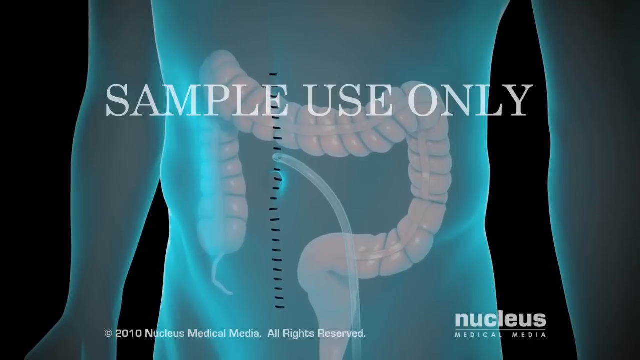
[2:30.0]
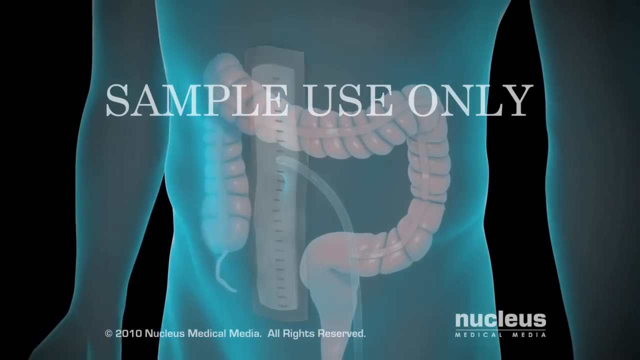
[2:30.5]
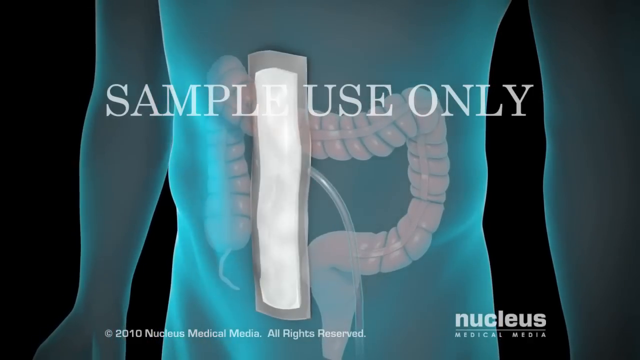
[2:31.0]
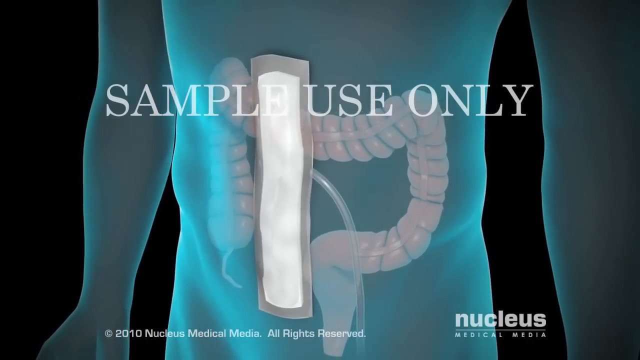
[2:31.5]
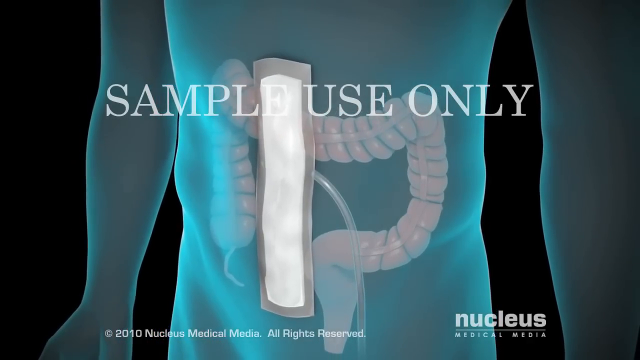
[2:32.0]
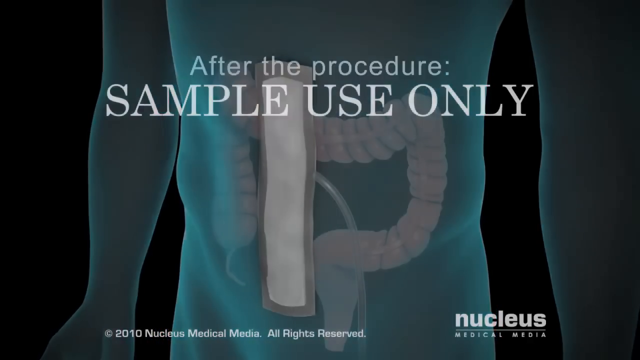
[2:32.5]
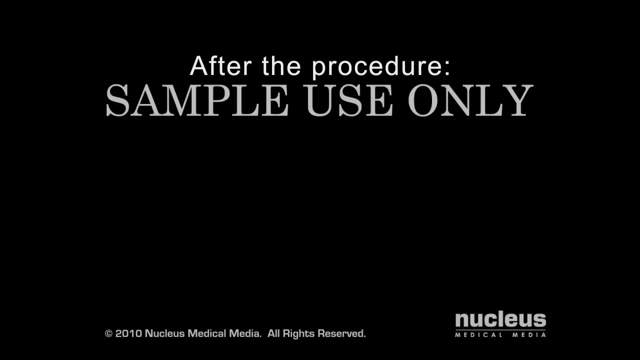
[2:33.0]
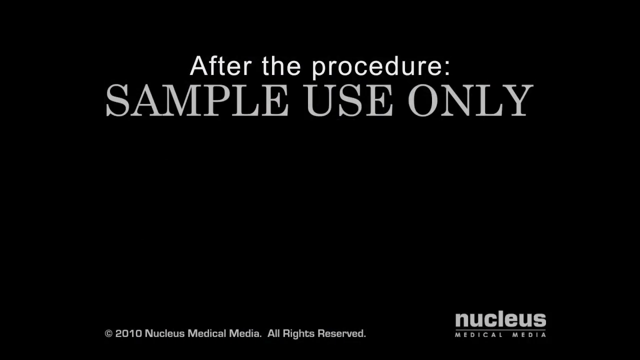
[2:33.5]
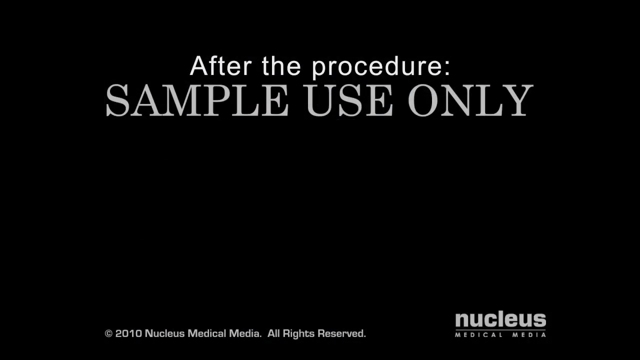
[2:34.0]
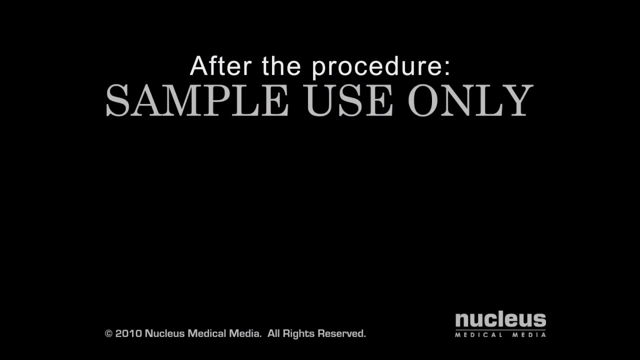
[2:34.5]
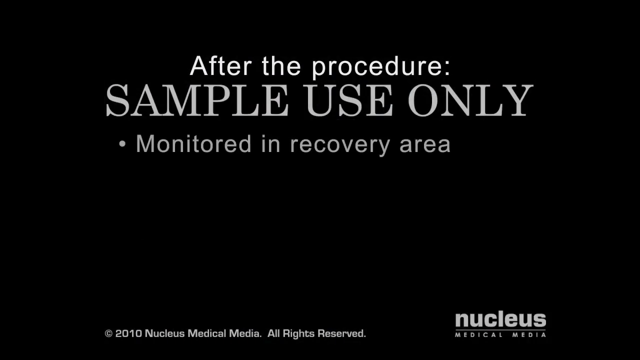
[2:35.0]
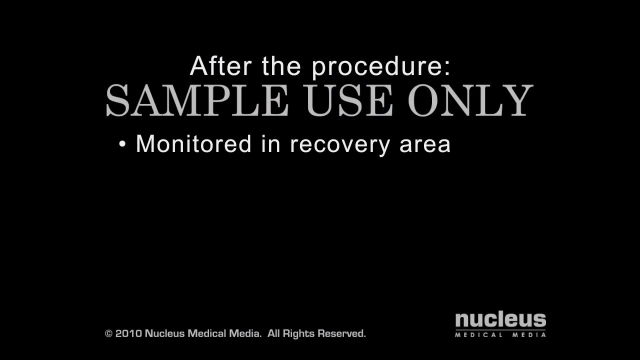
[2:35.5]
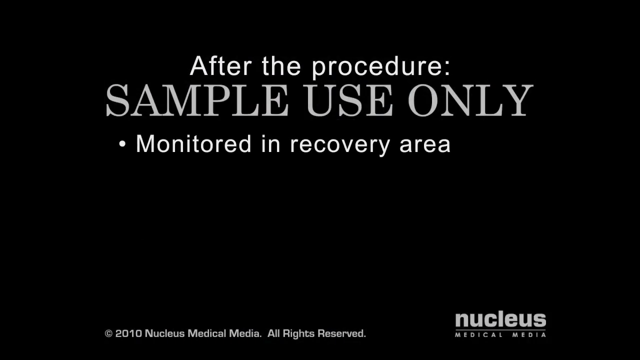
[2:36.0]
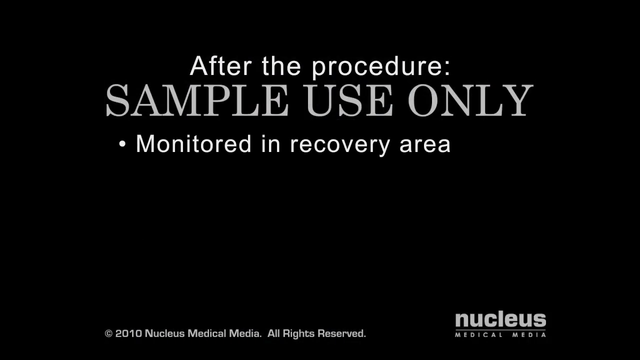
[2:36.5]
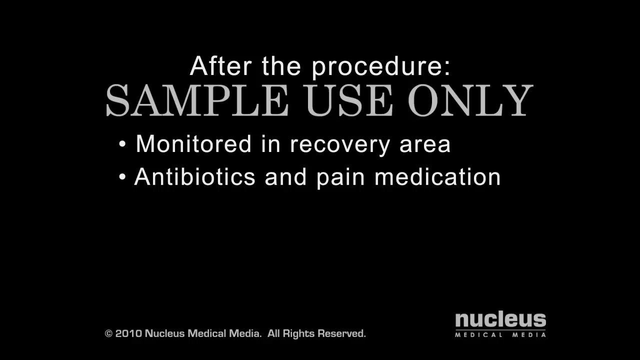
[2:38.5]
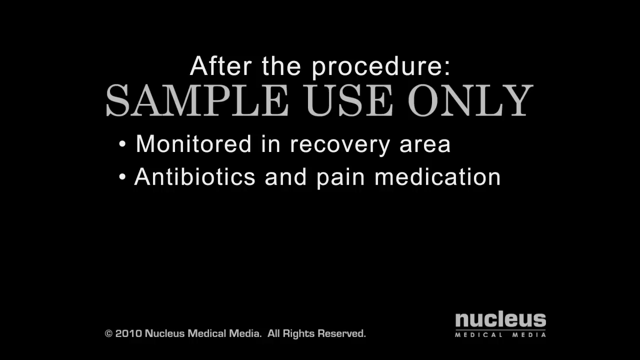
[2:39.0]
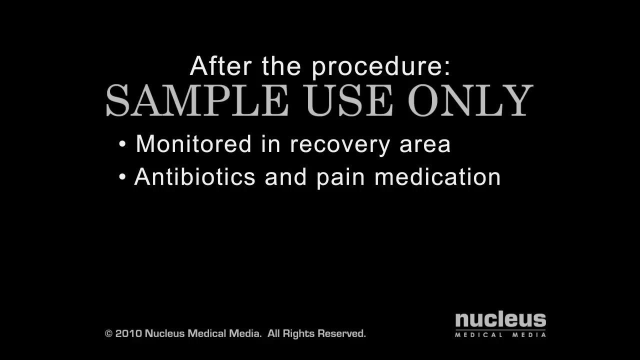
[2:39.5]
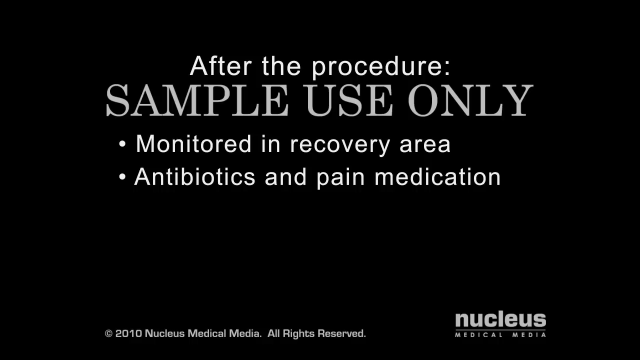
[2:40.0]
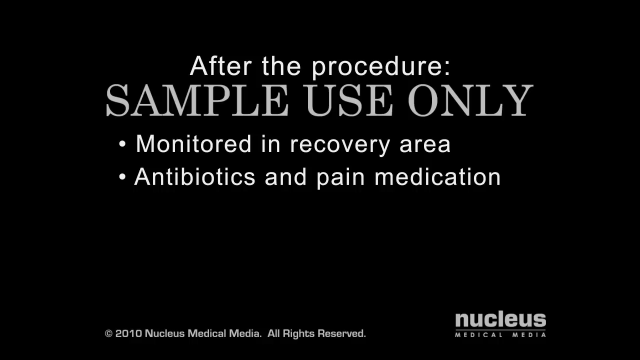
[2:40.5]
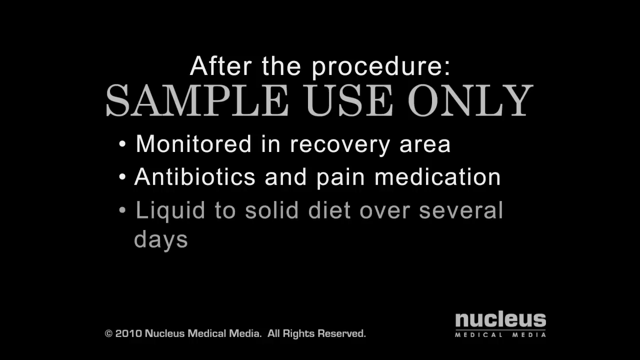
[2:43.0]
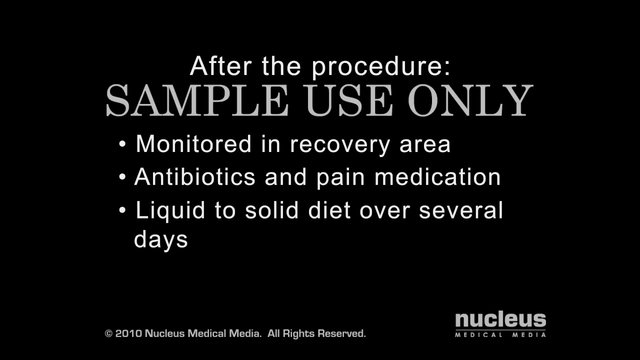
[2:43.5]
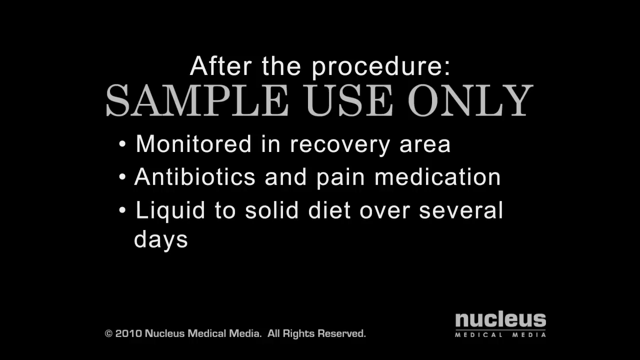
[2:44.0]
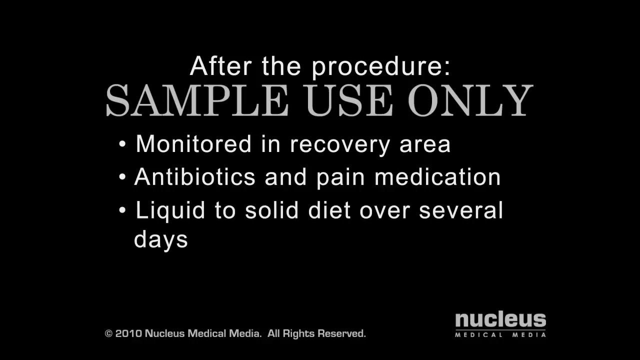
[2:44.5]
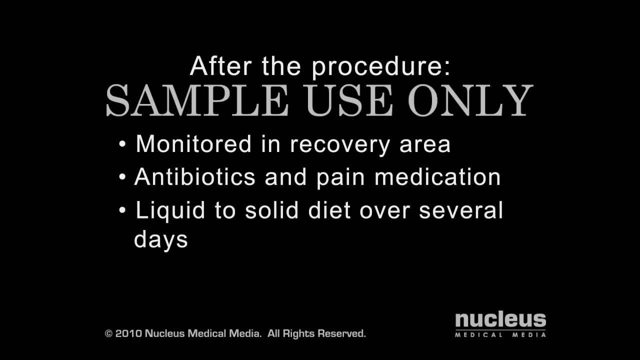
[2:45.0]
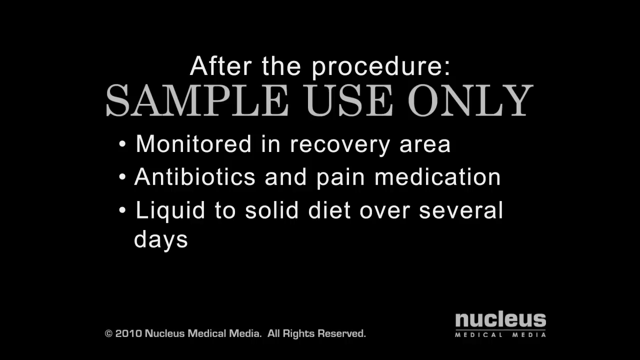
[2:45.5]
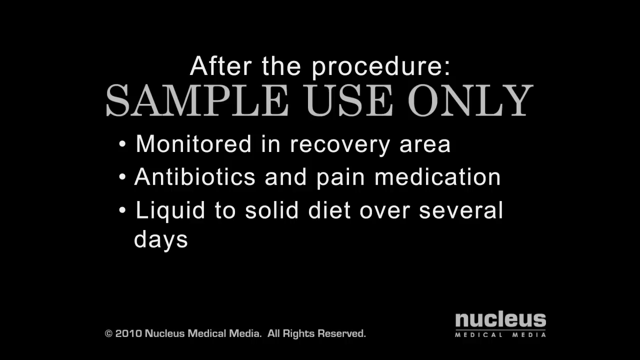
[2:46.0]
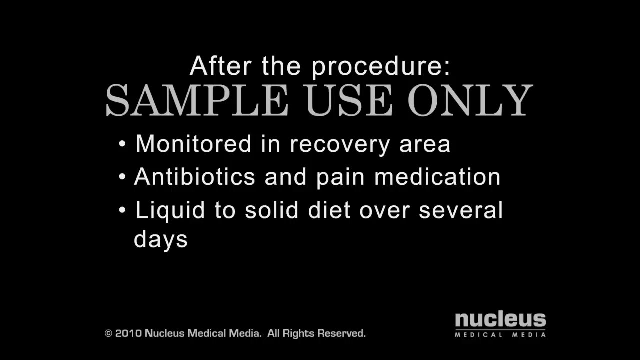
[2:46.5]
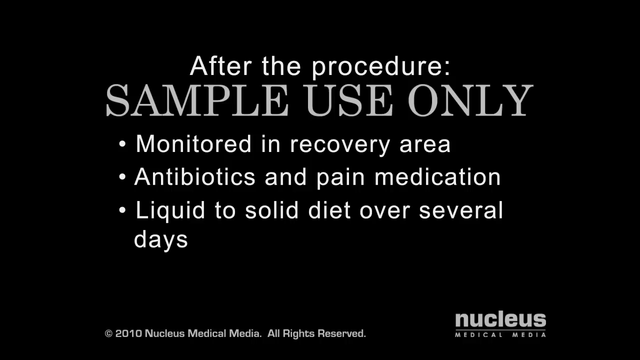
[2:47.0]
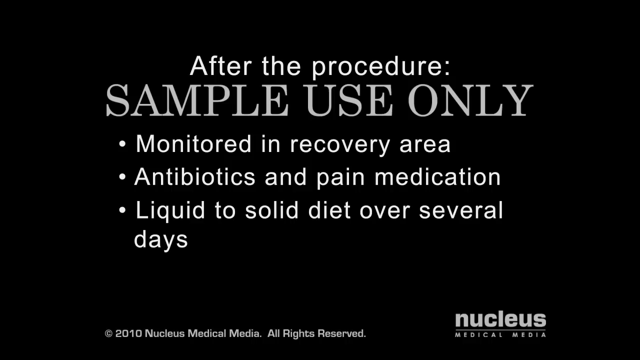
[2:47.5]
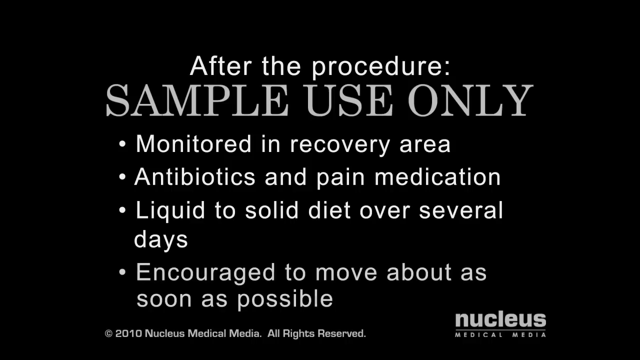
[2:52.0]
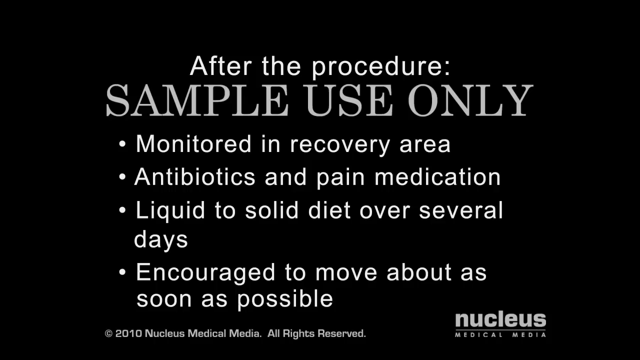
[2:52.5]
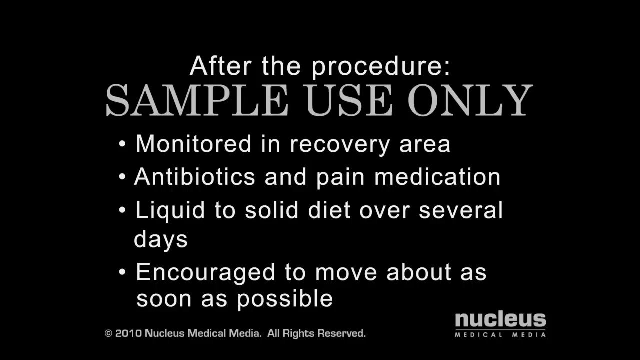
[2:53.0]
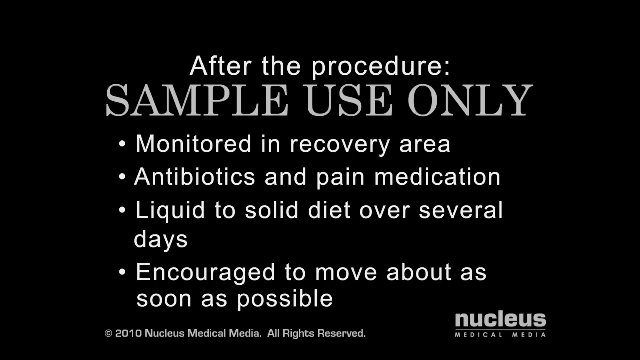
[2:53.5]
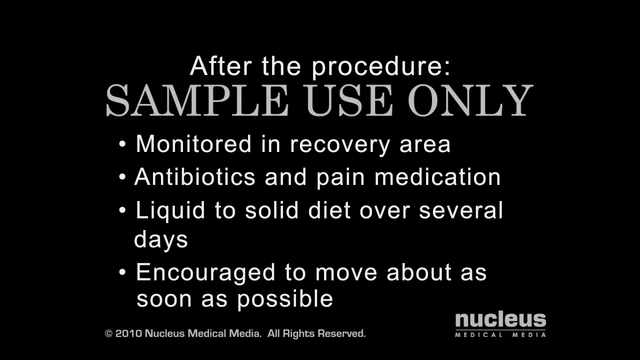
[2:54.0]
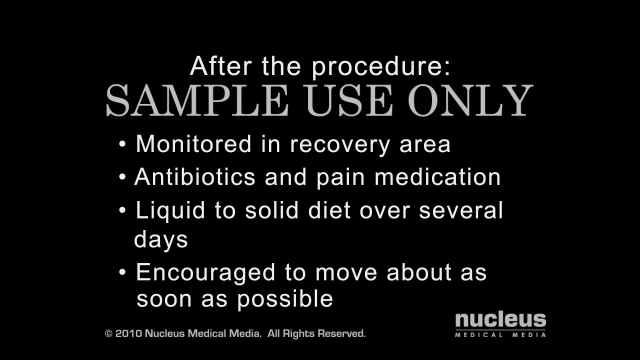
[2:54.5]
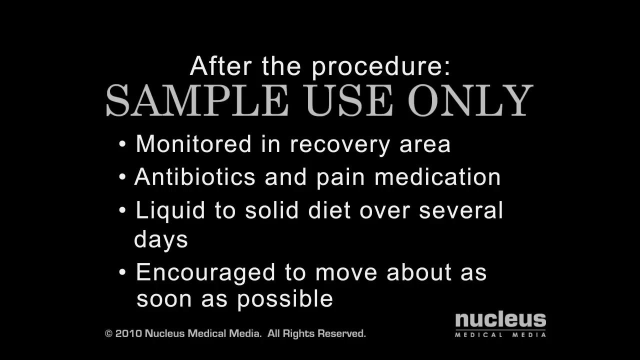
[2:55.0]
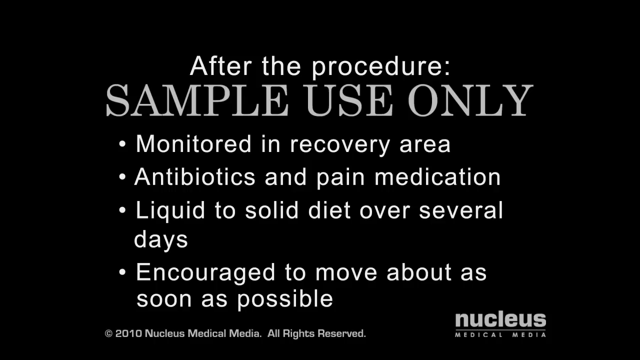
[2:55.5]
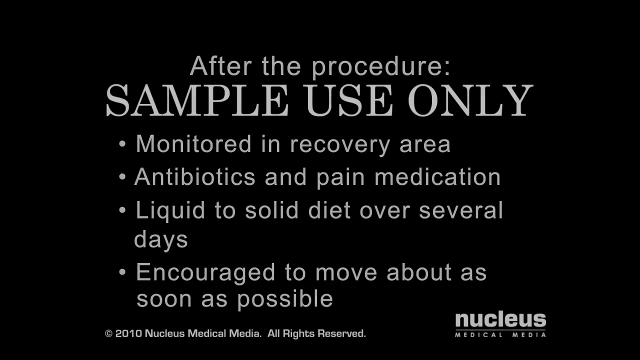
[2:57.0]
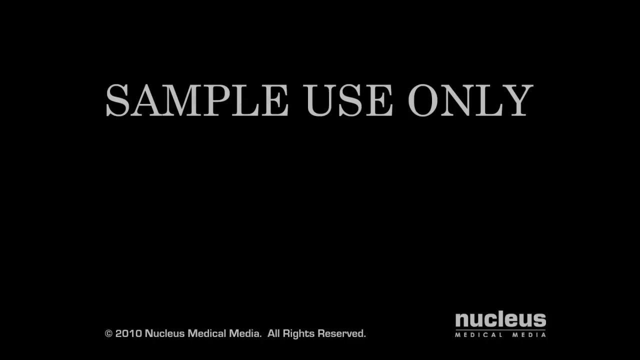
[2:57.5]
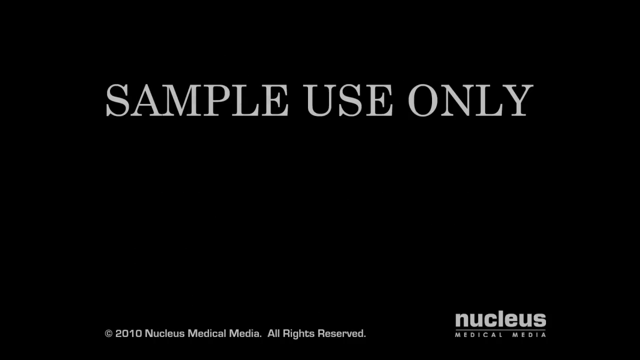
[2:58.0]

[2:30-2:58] "Sample use only" appears in all caps in white print. Text reads "after the procedure" and lists bullet points: "monitored in recovery area," "antibiotics and pain medication," "liquid to solid diet over several days," and "encouraged to move about as soon as possible." The writing is white on a black background.